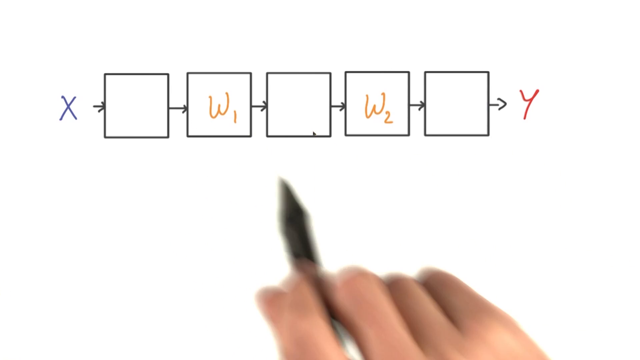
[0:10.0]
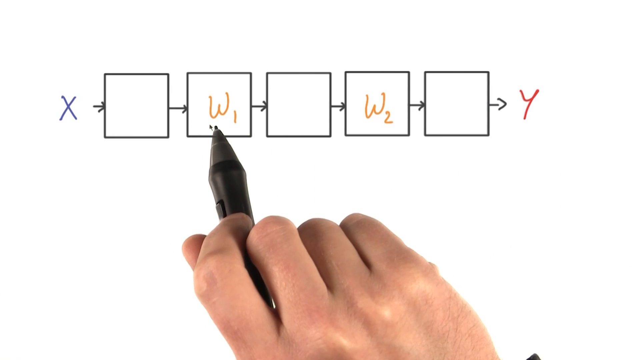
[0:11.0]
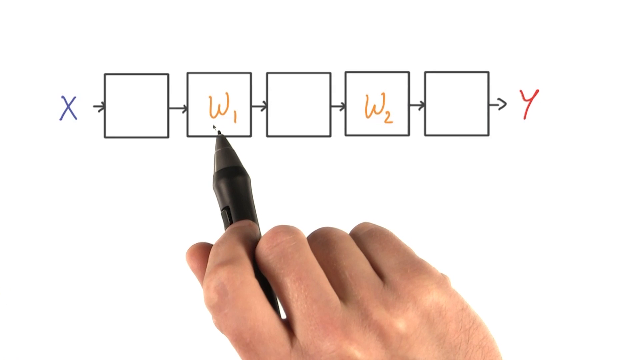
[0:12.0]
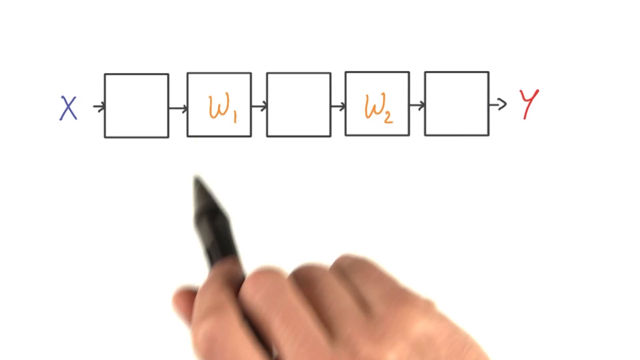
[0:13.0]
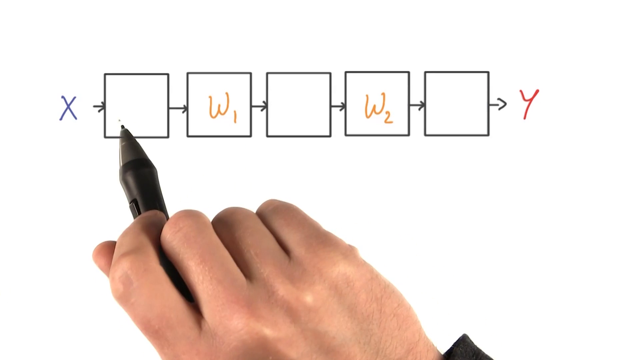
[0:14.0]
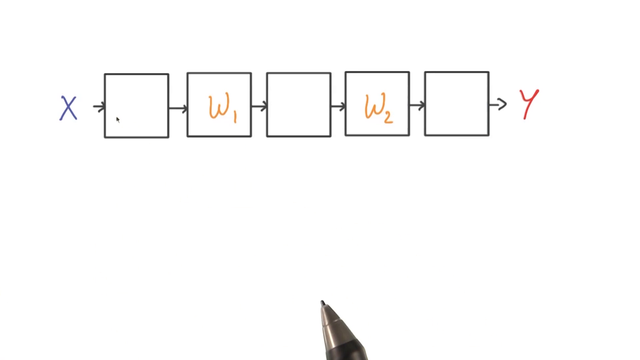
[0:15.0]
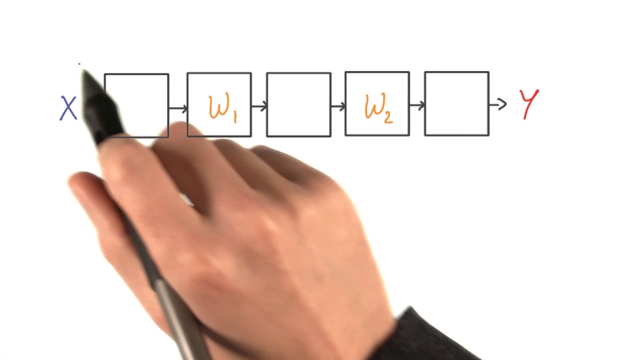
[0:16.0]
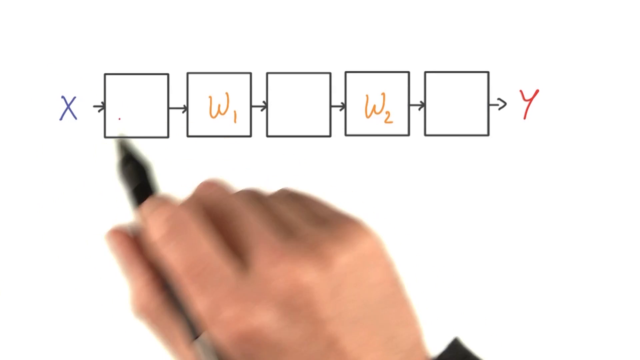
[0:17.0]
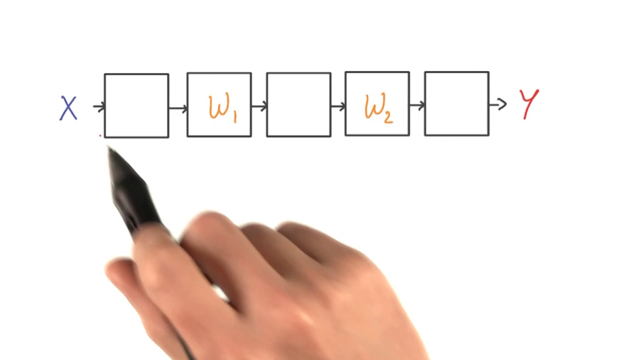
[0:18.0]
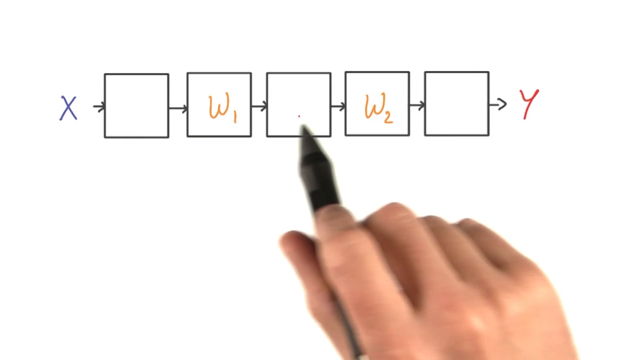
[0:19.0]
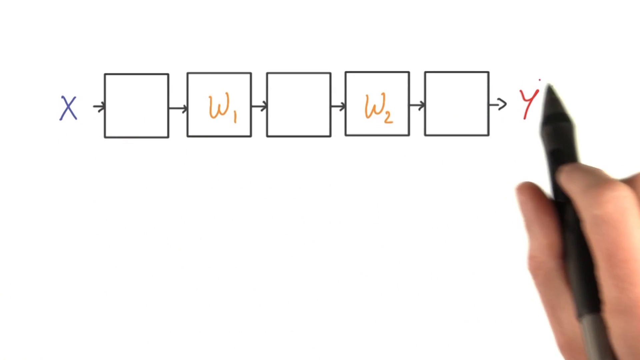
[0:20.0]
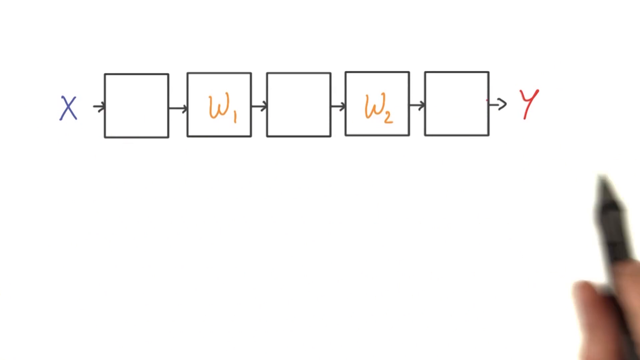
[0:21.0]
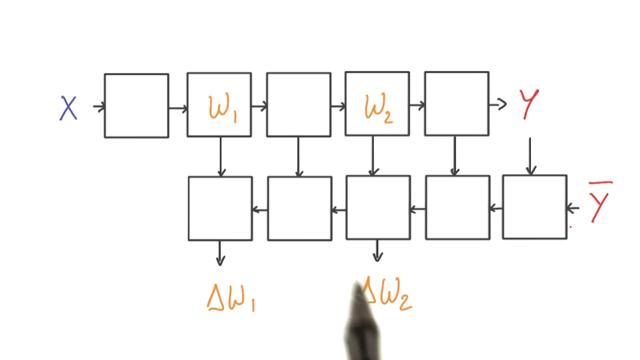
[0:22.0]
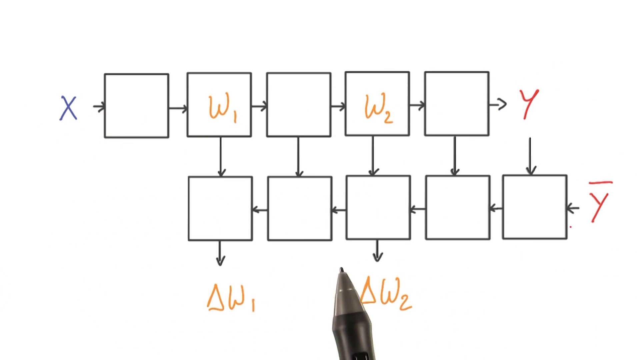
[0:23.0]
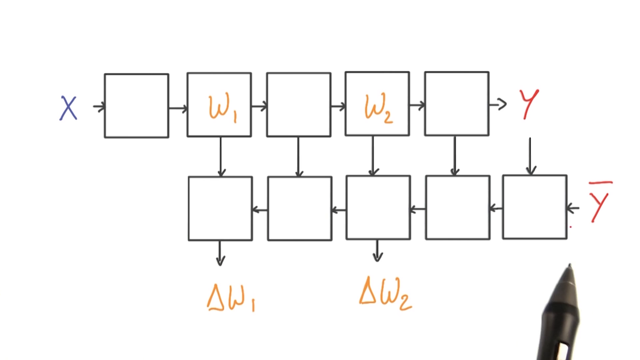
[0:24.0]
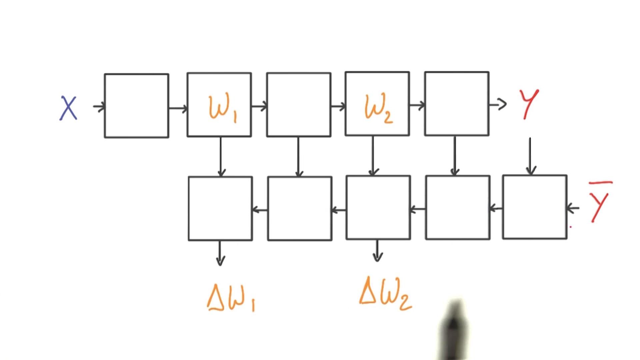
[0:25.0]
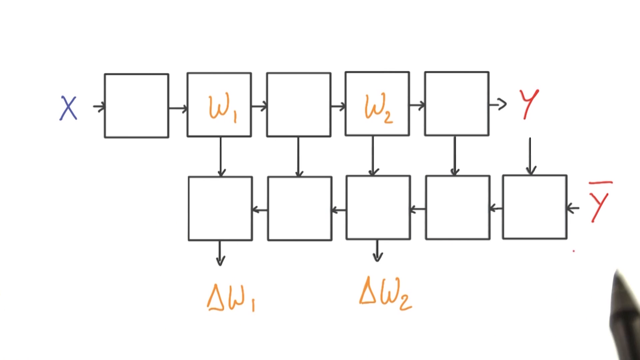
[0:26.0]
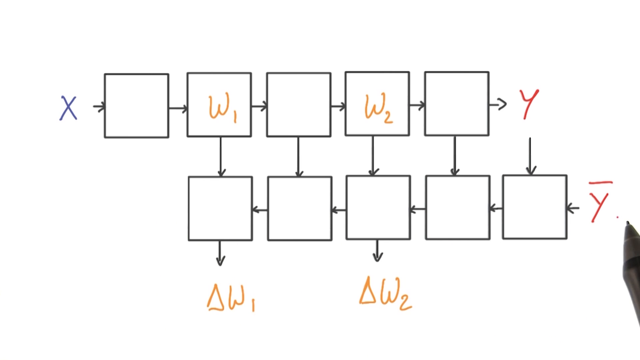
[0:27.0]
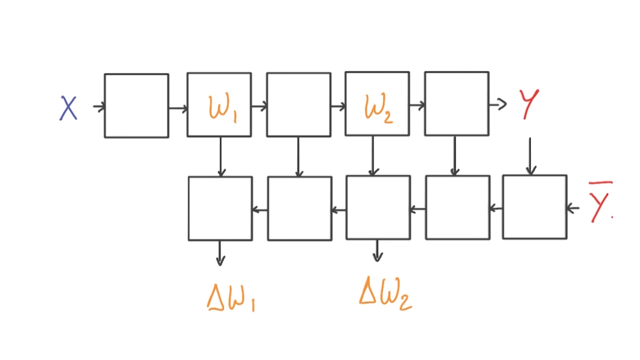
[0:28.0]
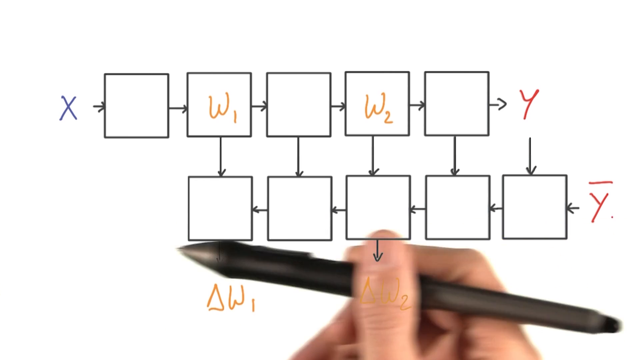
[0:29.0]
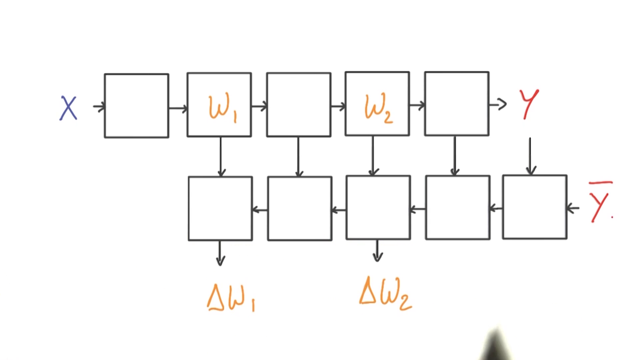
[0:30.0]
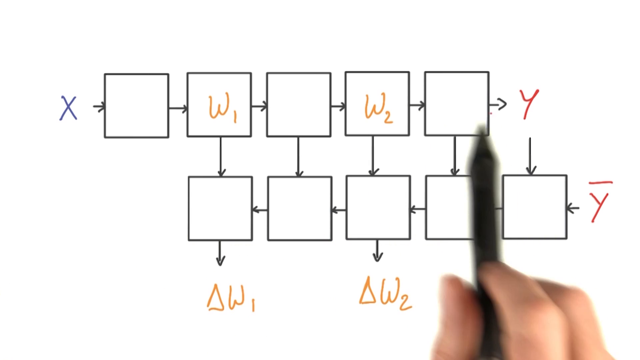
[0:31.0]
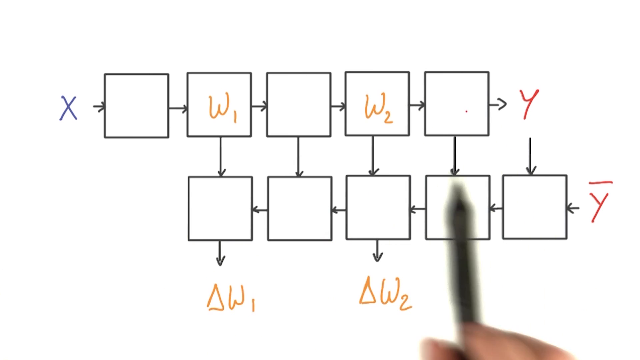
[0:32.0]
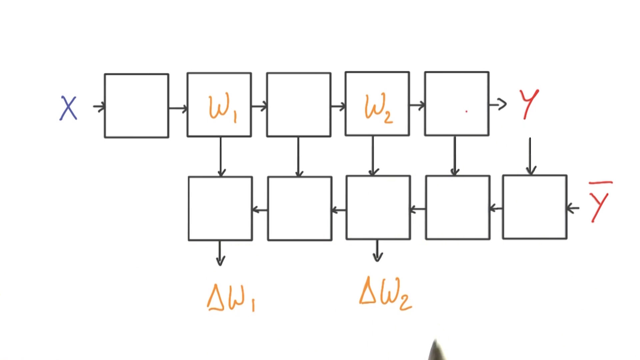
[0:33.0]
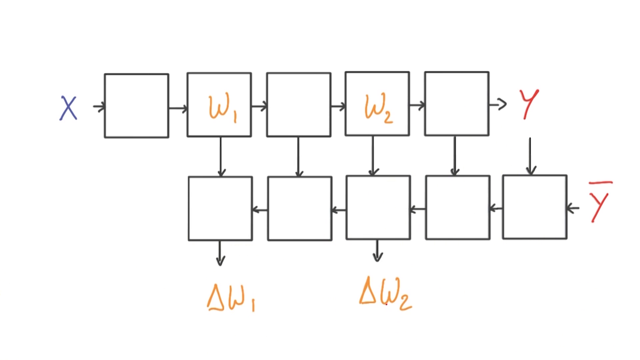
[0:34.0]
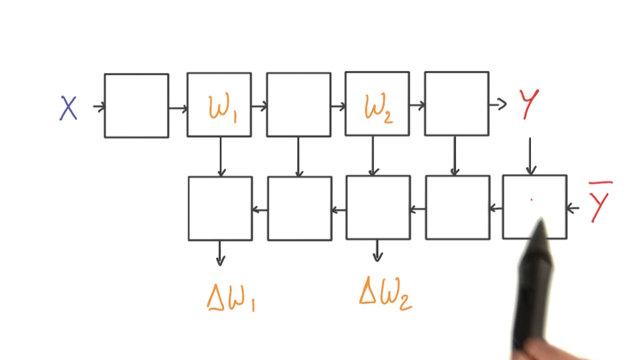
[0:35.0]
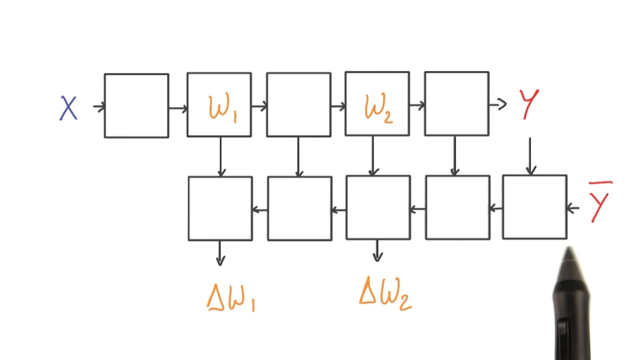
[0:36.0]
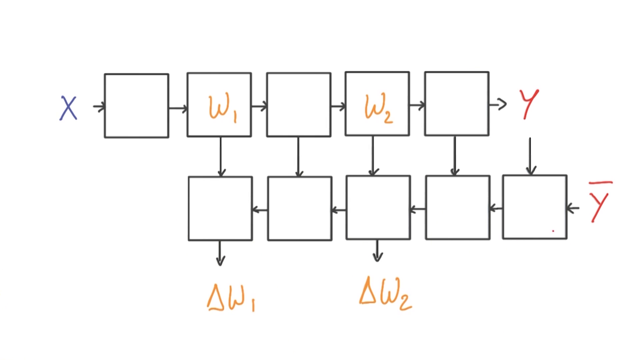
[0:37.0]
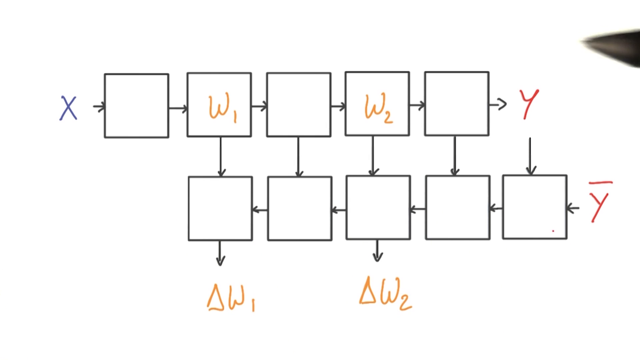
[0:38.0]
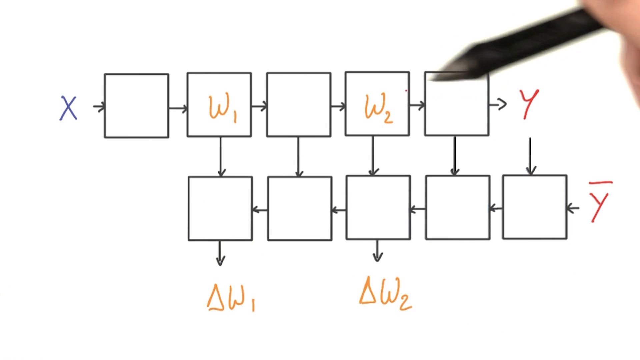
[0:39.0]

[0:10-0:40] The person behind the camera continues using the pen to point to different parts of the already drawn system, including the parts of W1. They show how something on the first square moves from the X to the first square, then the second, third, fourth and fifth, and then arrives at the Y, moving a hand across all the squares and circling around the X and the Y to show the order. The drawing is then expanded with another part right below, called Y negative. Delta W1 and delta W2 appear right below the third and fifth squares.